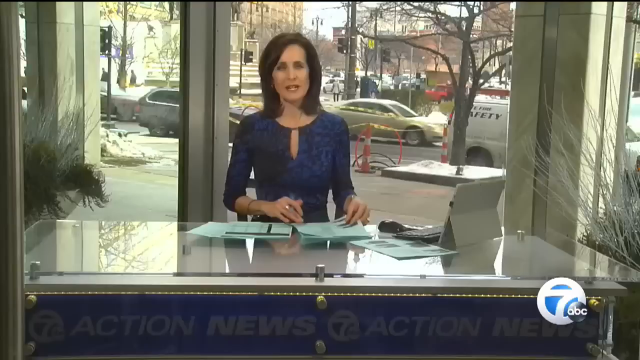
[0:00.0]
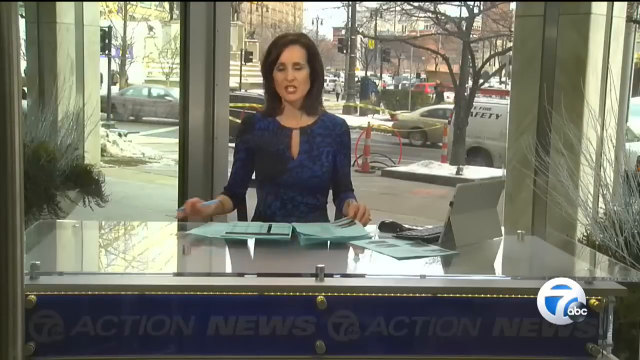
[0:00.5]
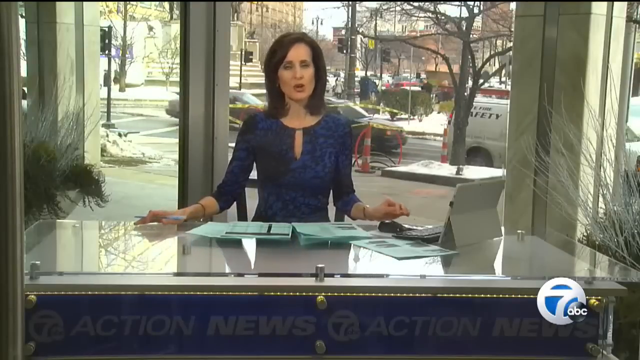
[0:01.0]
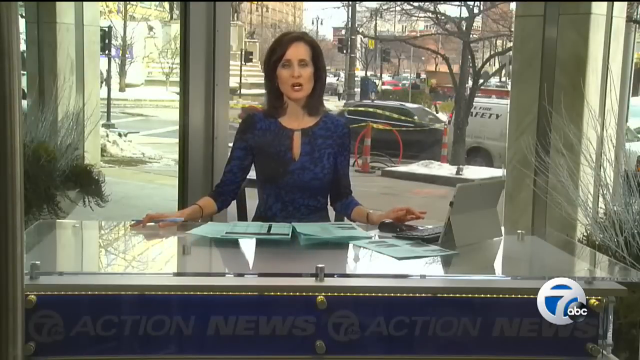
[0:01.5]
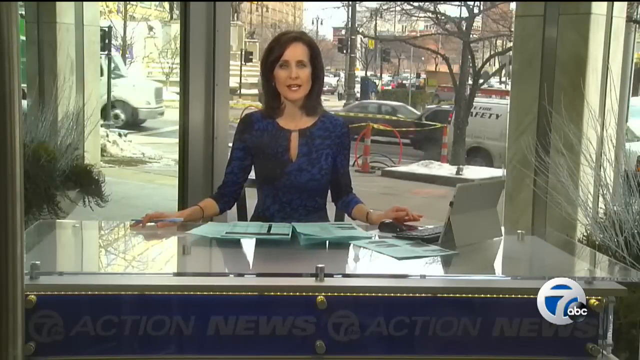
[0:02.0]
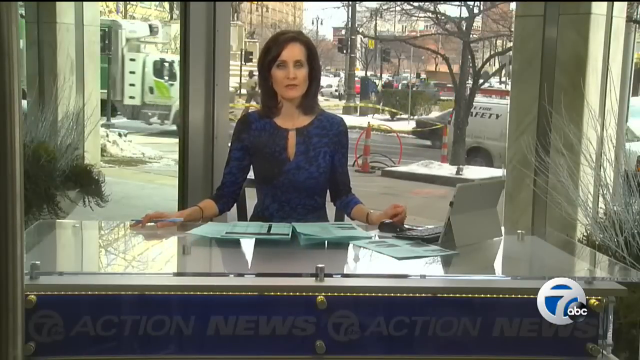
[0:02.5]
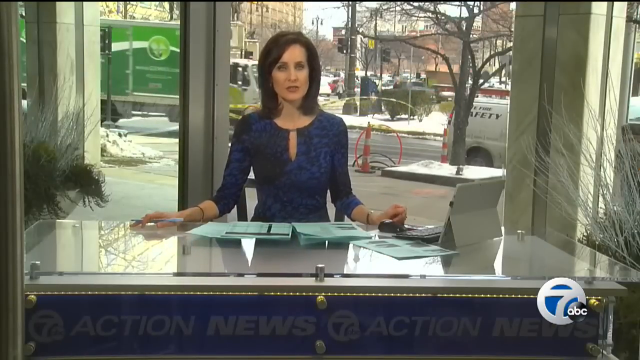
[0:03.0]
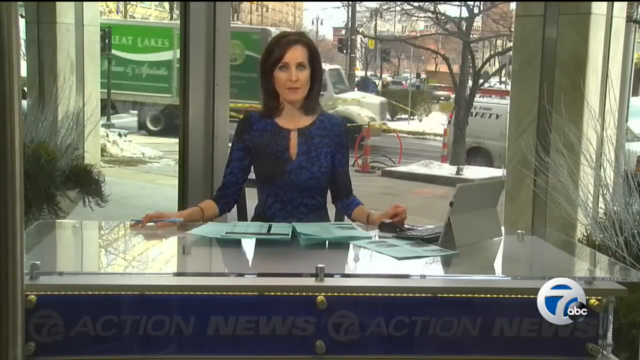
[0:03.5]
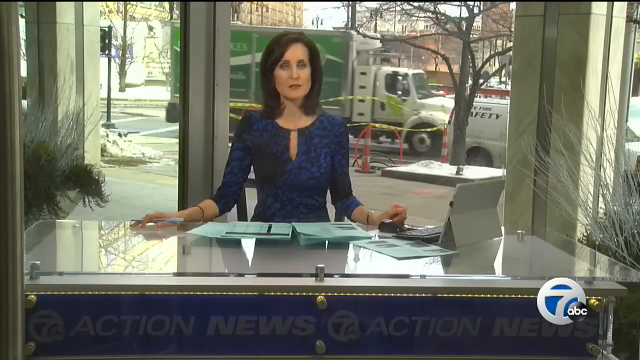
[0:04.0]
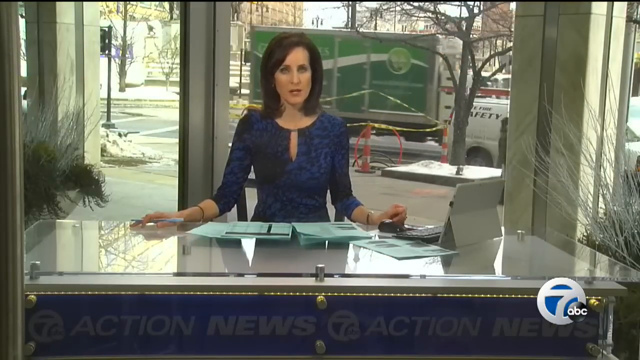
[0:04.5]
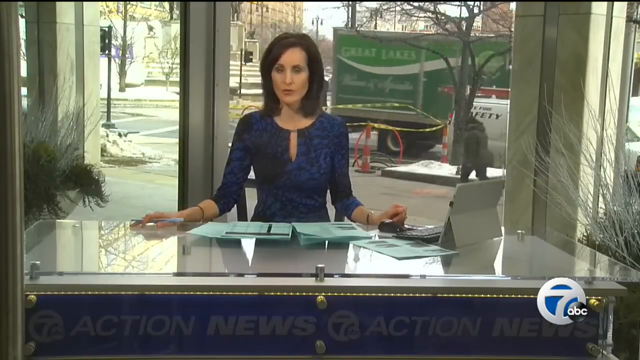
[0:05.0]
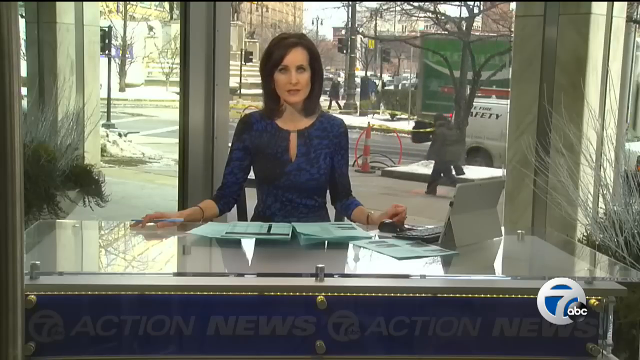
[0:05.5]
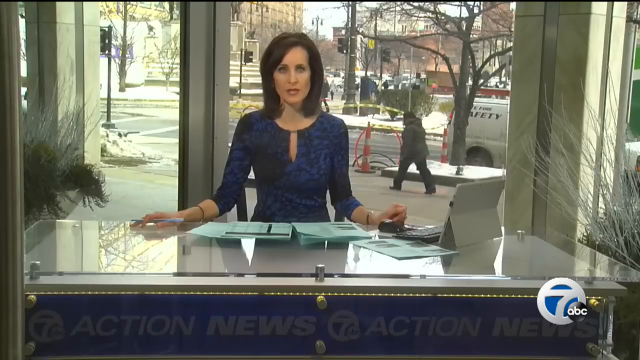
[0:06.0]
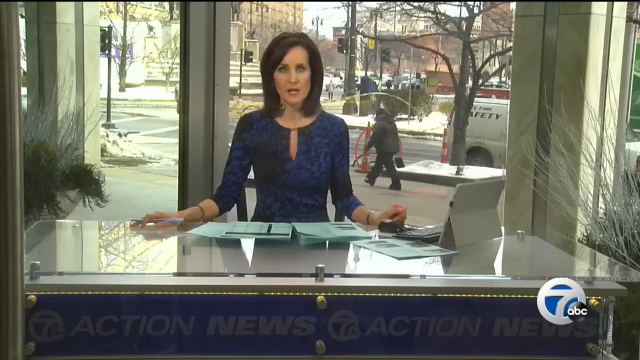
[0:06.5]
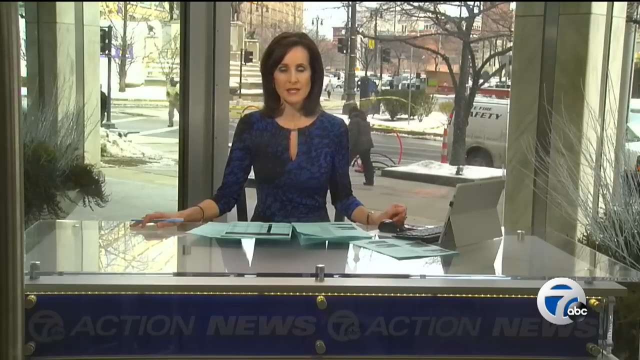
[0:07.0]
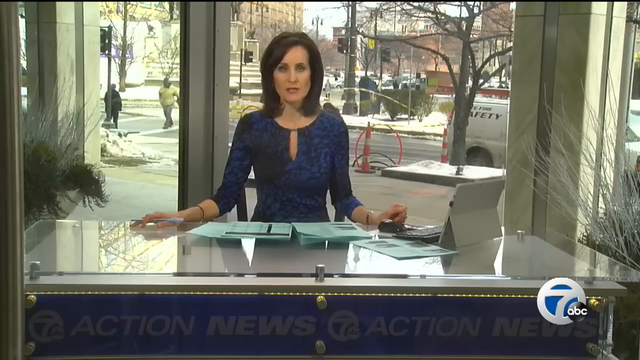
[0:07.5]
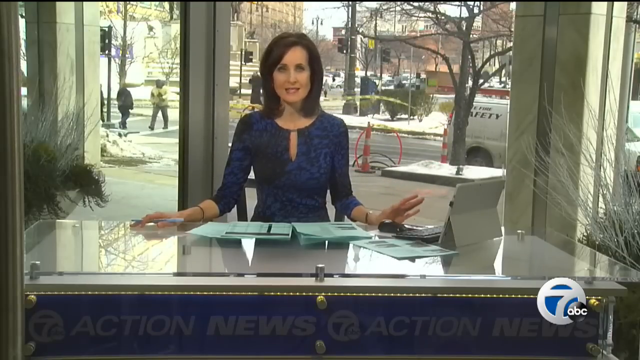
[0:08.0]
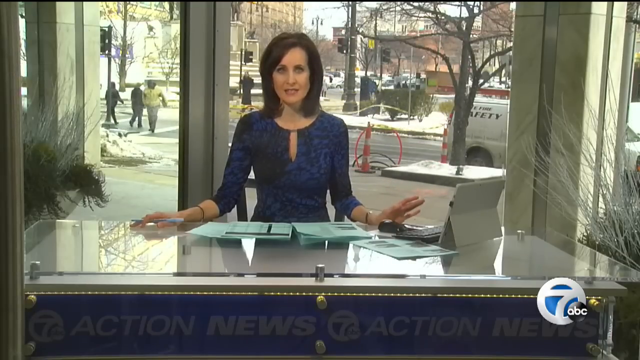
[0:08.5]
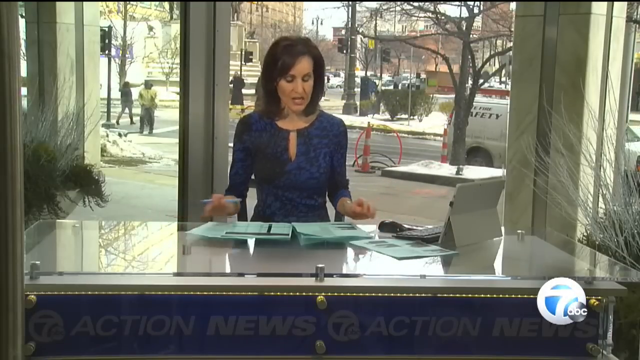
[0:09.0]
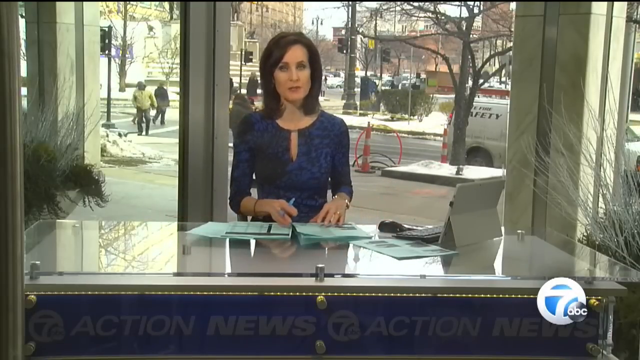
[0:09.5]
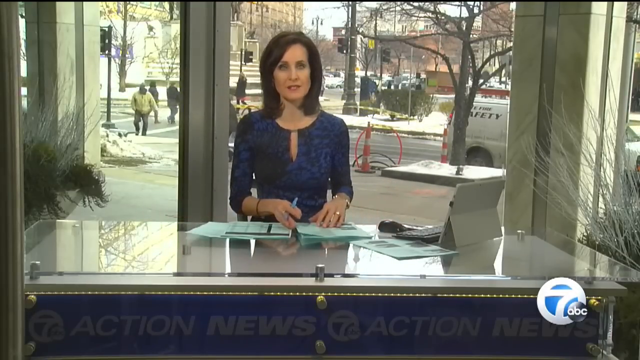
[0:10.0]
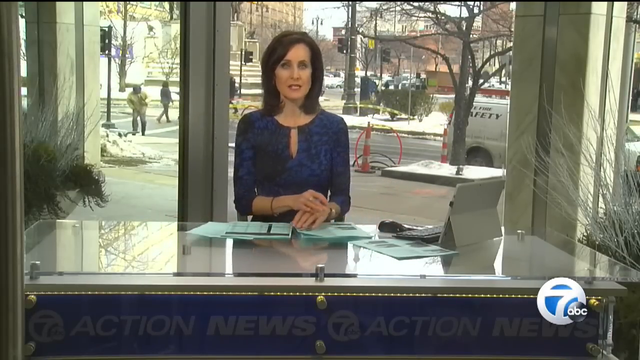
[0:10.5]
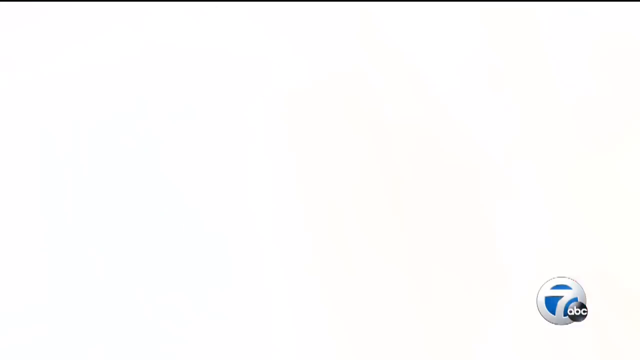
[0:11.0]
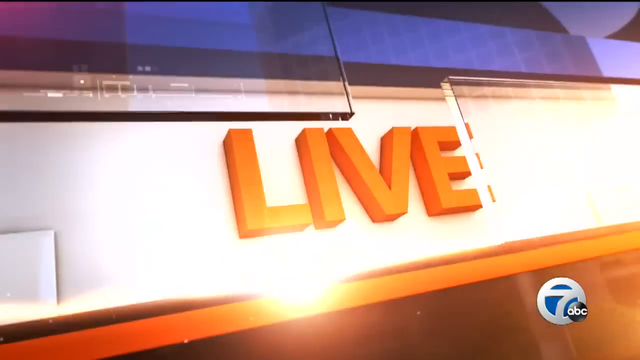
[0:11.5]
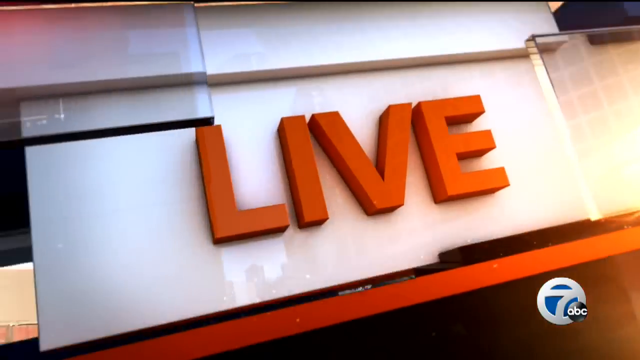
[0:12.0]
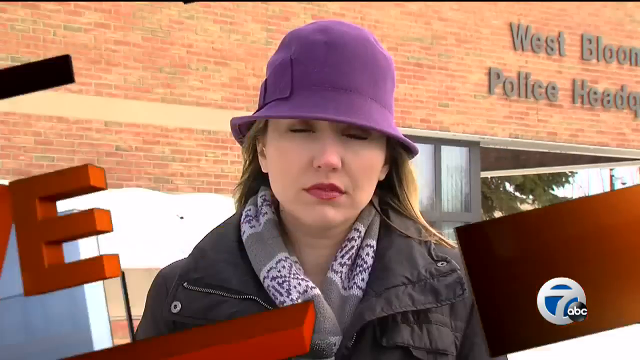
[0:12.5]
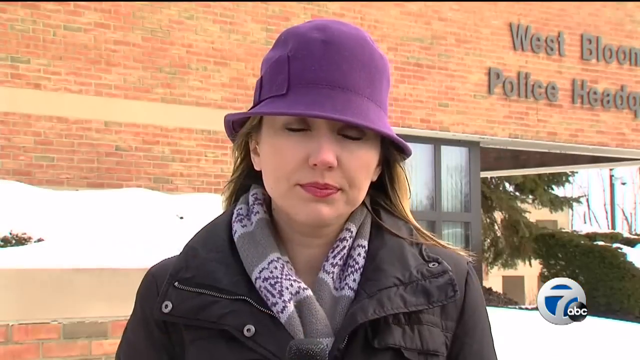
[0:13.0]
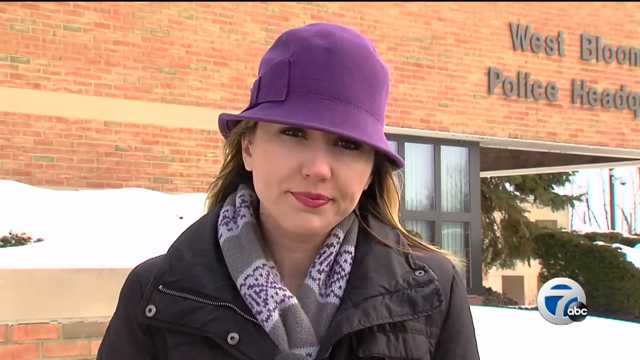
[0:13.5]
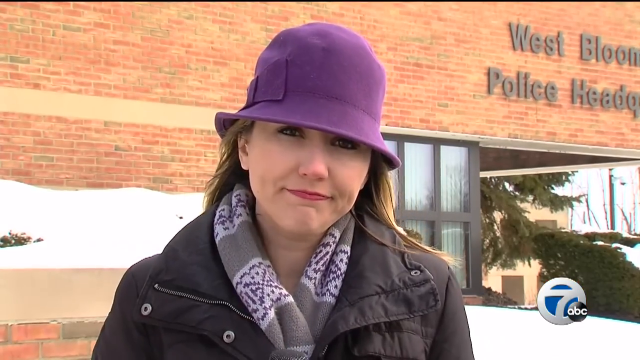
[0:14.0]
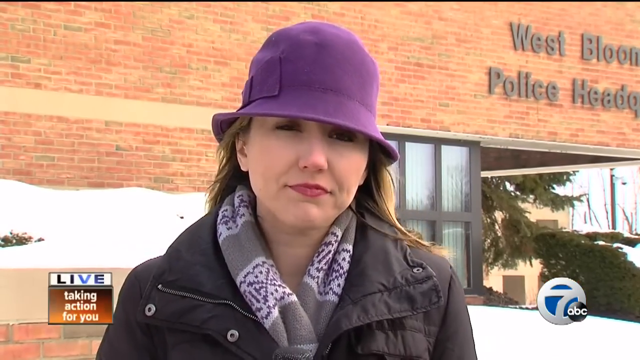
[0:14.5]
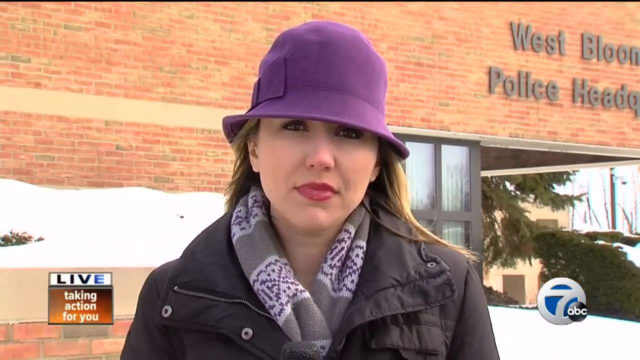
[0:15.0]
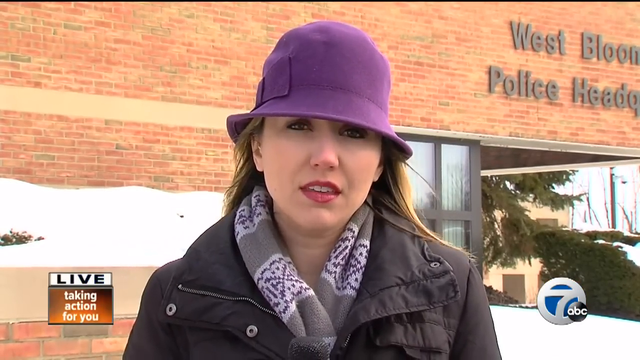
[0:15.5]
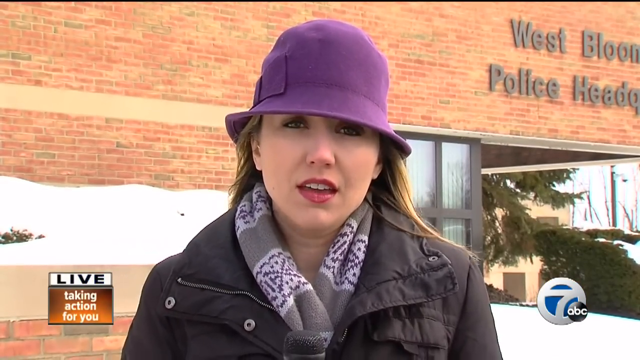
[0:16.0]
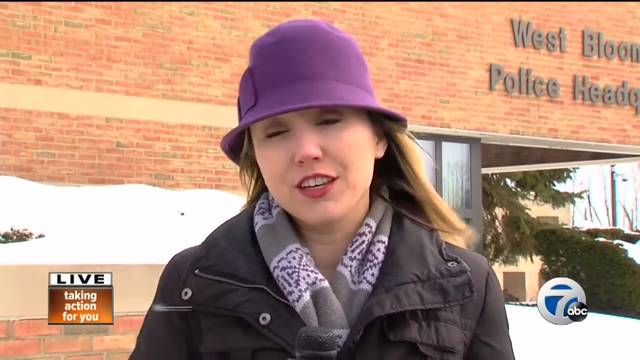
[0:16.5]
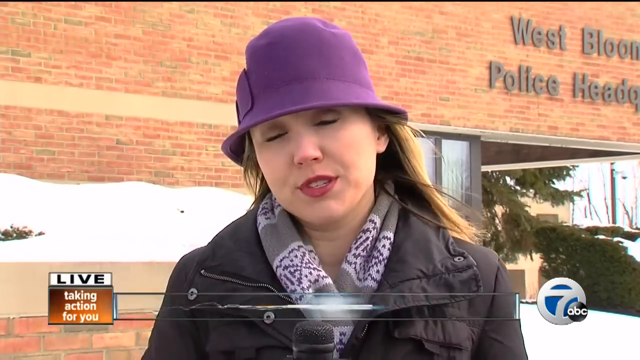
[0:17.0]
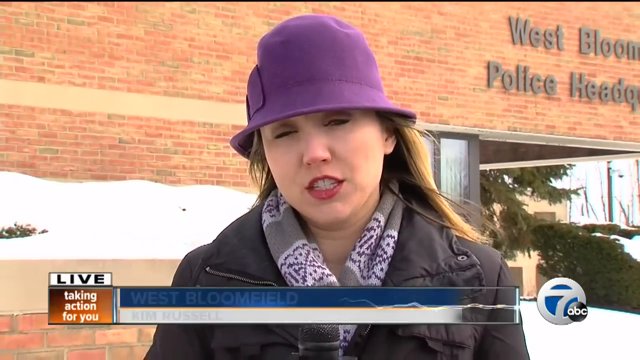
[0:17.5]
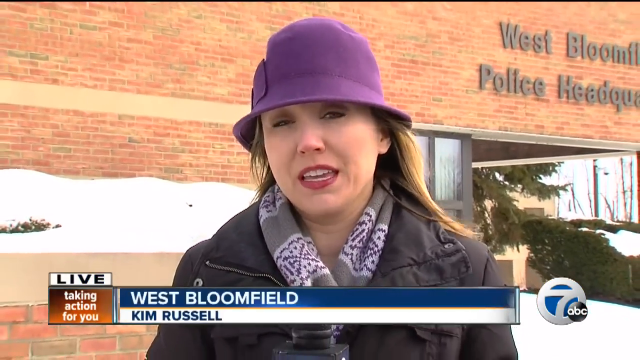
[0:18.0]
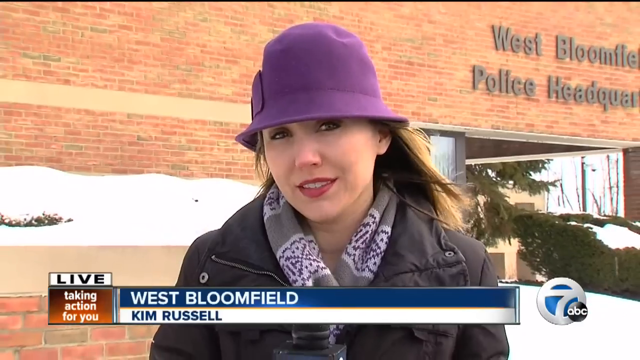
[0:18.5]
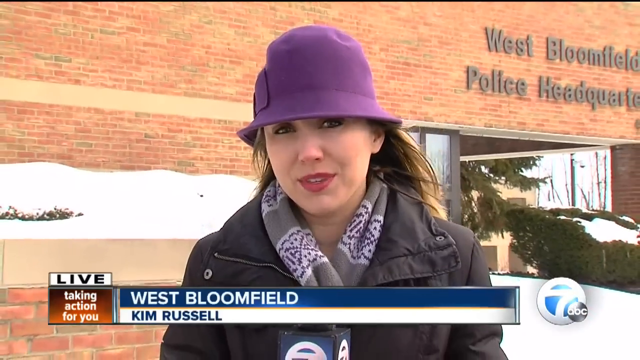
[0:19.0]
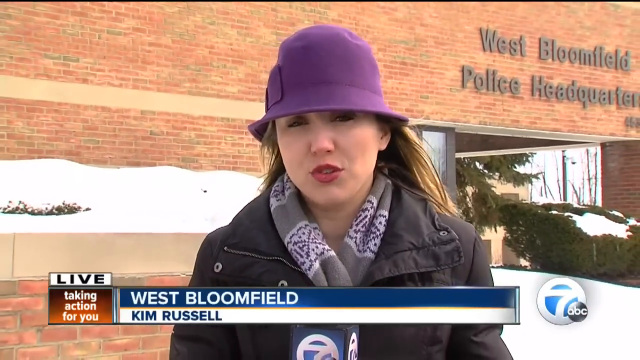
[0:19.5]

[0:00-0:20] A news desk is in view, with a woman reporting on some sort of news scene. She wears a blue blouse and has dark black hair. An overlay of the program appears reading "live", apparently the name of the program or segment, and at the bottom right there is an ABC logo with the number seven. The desk where she is reads "Action News" in blue, and there is a kind of glass overlay on the desk. The scene then segues to a reporter at a building with "West Bloomfield Police Headquarters" on the brick. She wears a round purple hat, a jacket and a scarf. Her name is shown as Kim Russell, and the text says she is reporting from West Bloomfield. The weather looks colder given her jacket, and some snow appears in the background.